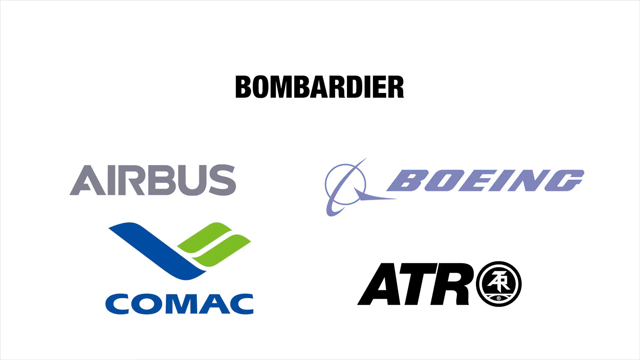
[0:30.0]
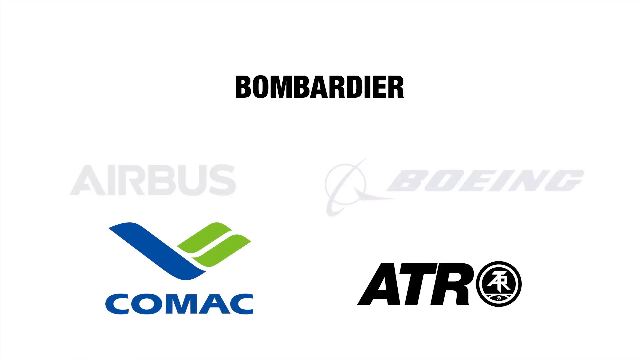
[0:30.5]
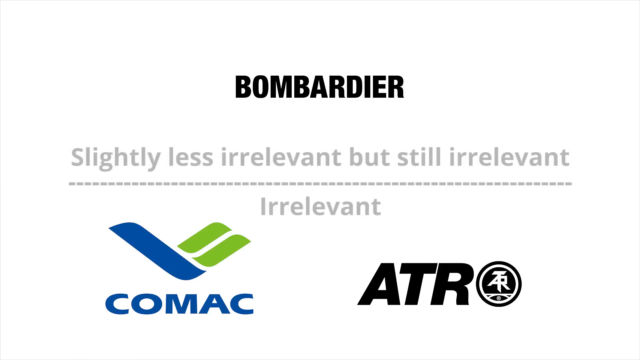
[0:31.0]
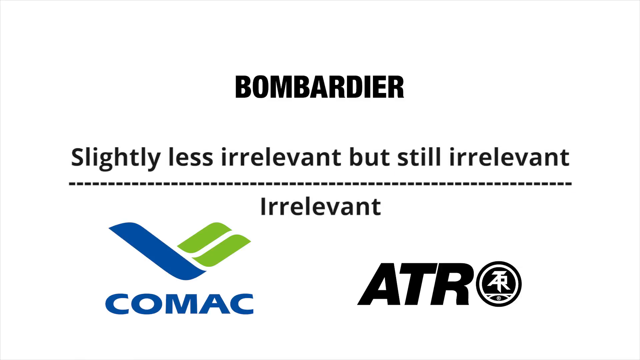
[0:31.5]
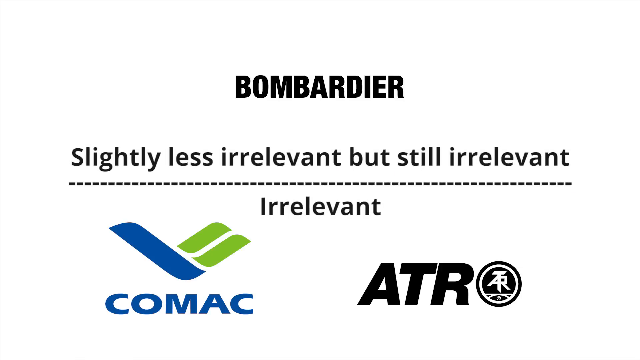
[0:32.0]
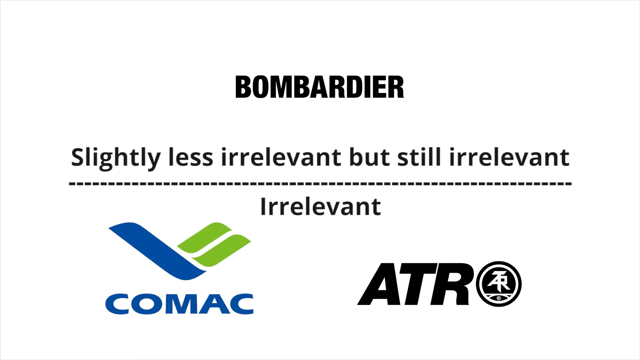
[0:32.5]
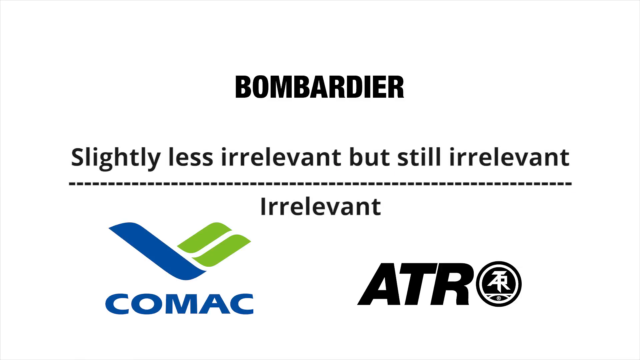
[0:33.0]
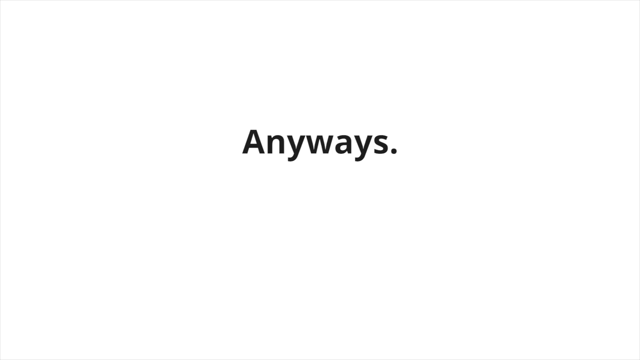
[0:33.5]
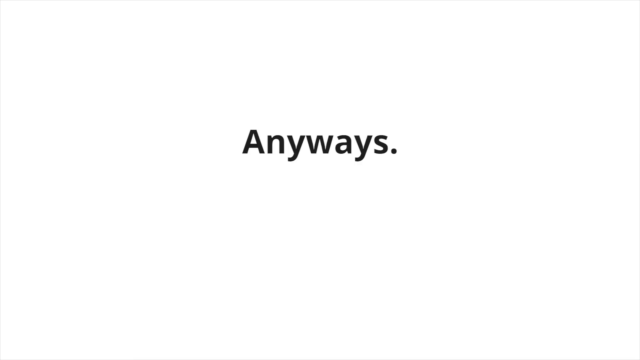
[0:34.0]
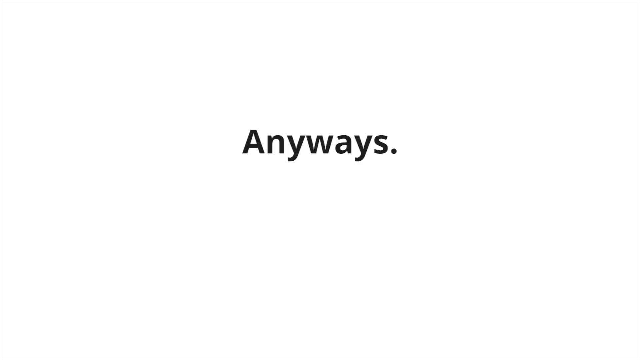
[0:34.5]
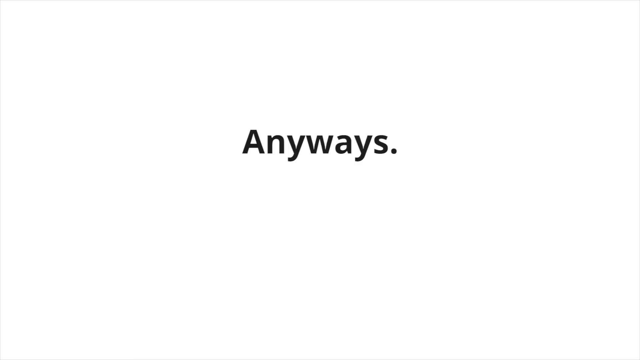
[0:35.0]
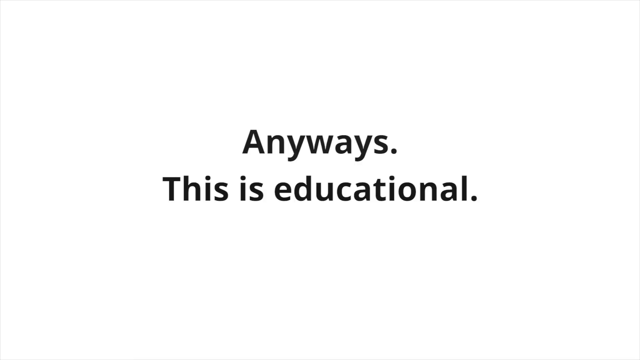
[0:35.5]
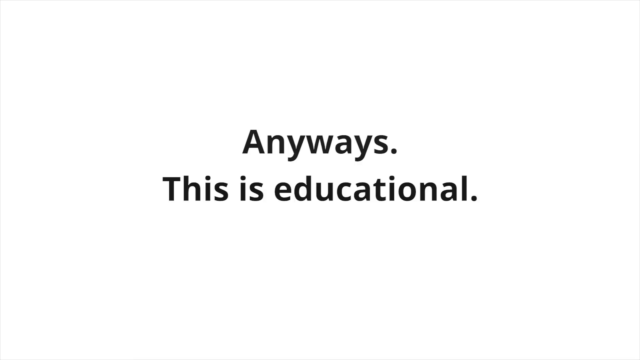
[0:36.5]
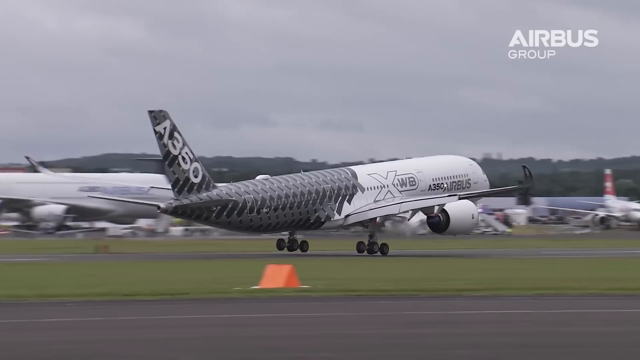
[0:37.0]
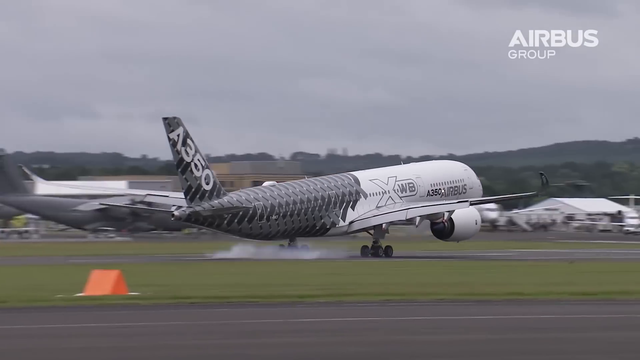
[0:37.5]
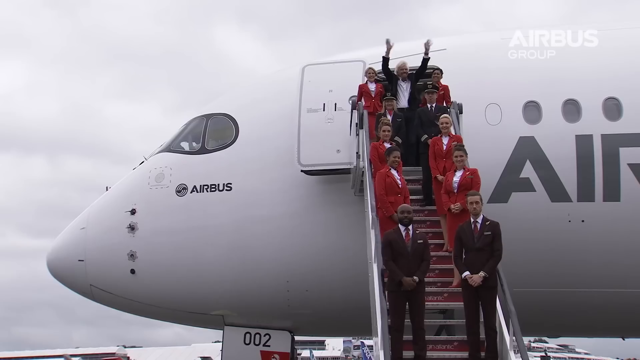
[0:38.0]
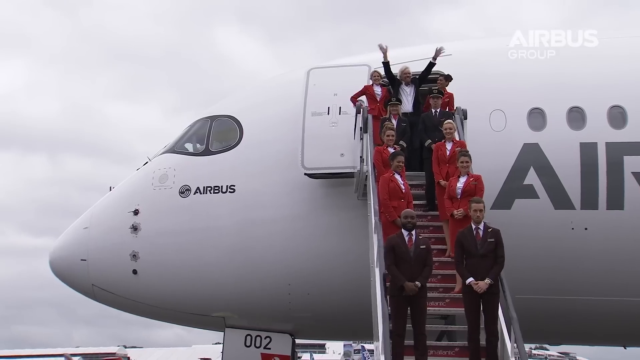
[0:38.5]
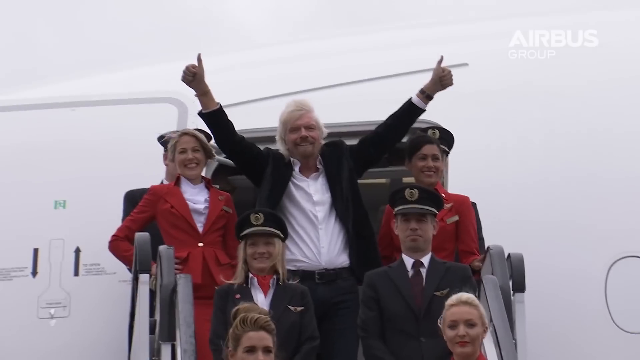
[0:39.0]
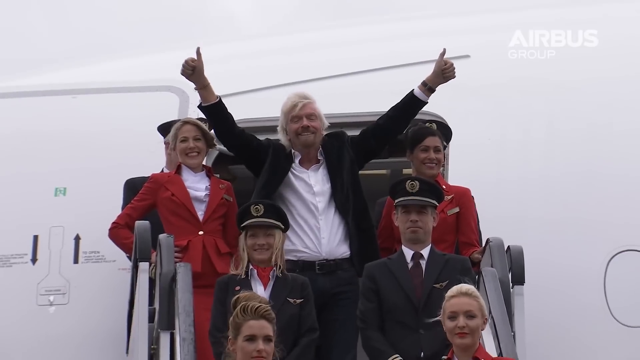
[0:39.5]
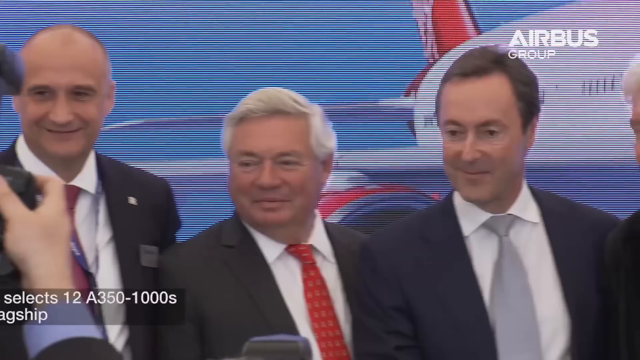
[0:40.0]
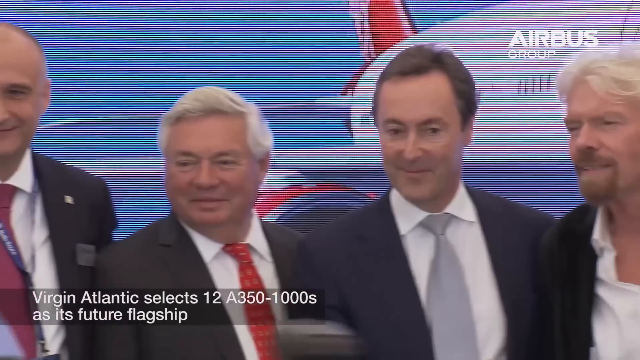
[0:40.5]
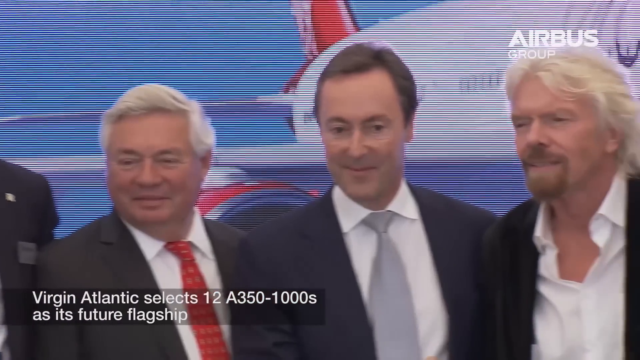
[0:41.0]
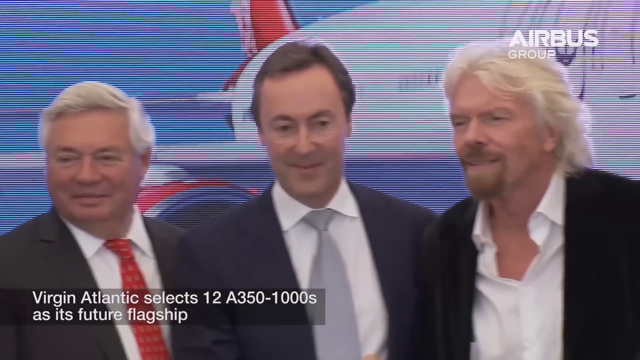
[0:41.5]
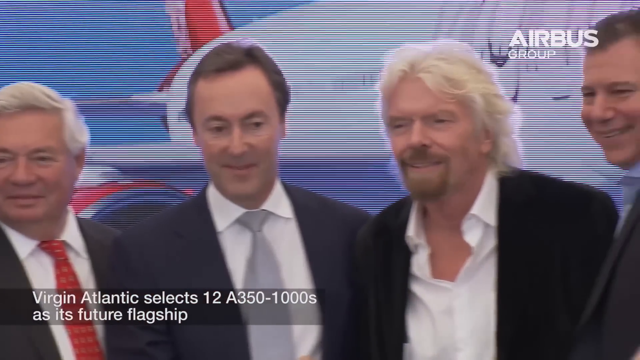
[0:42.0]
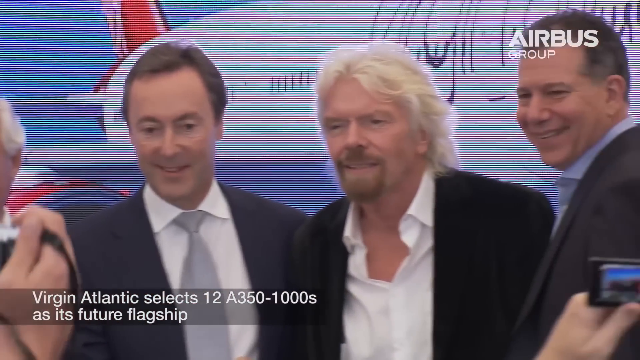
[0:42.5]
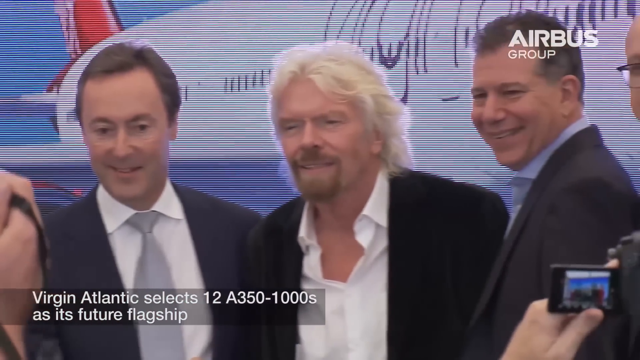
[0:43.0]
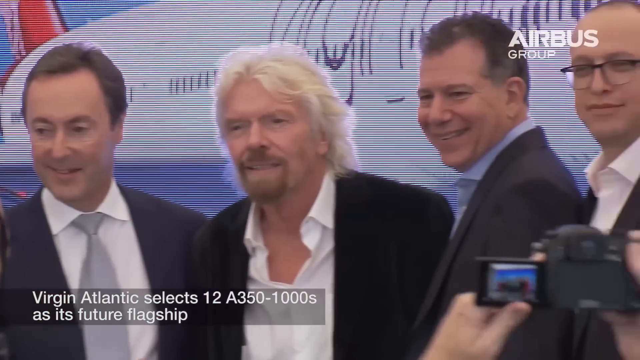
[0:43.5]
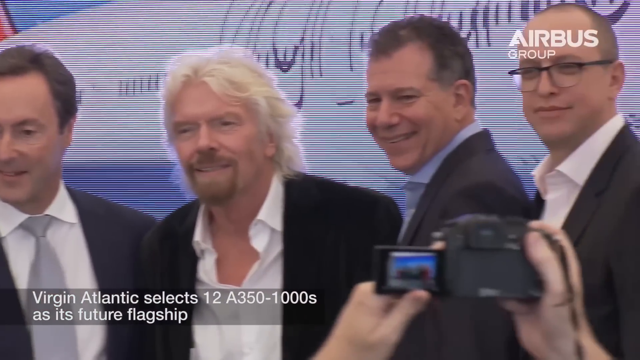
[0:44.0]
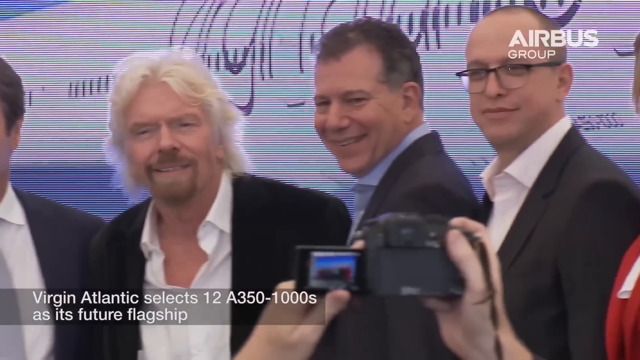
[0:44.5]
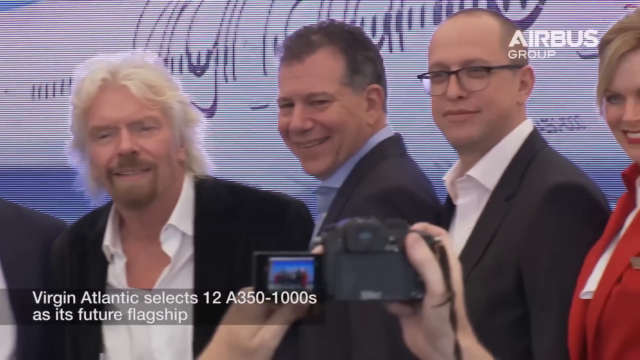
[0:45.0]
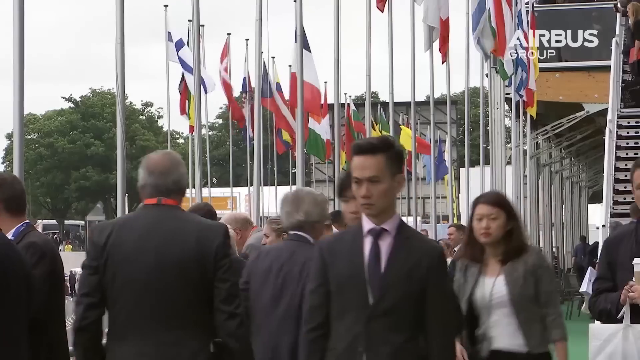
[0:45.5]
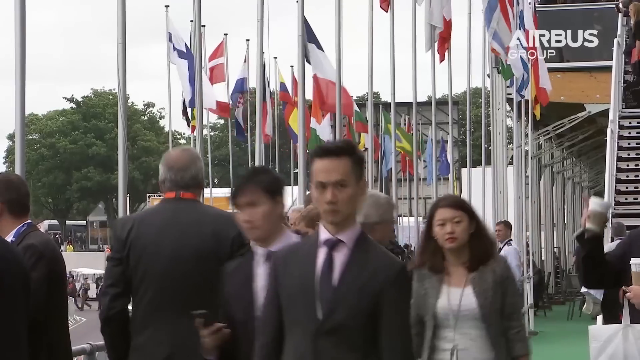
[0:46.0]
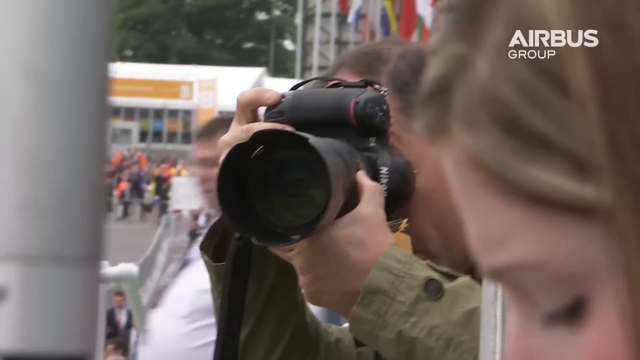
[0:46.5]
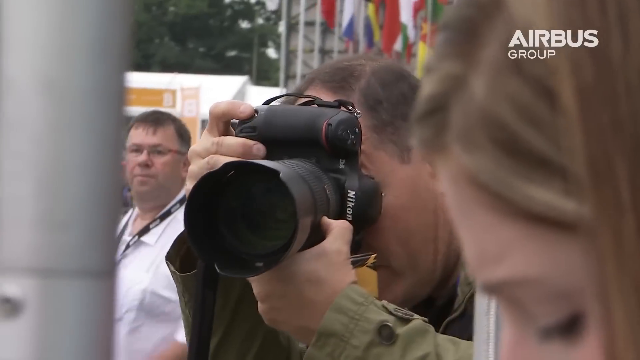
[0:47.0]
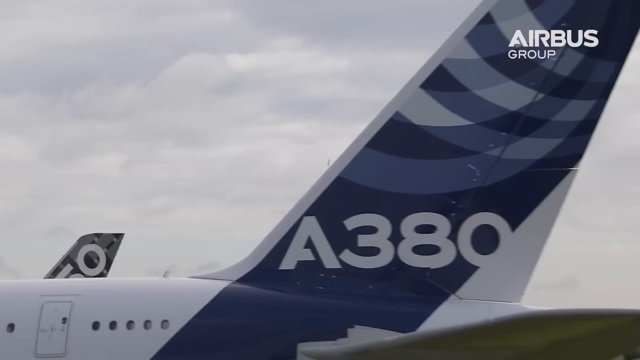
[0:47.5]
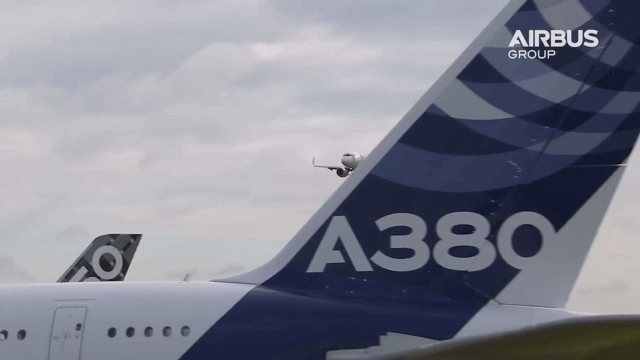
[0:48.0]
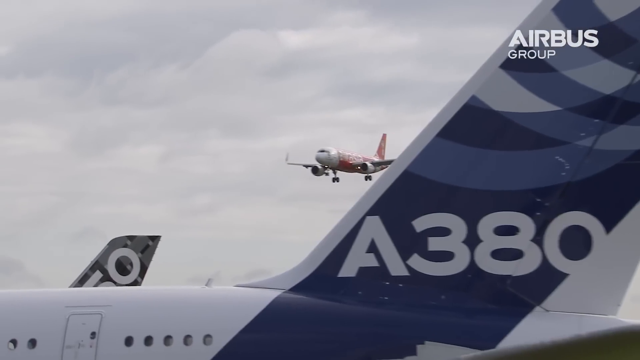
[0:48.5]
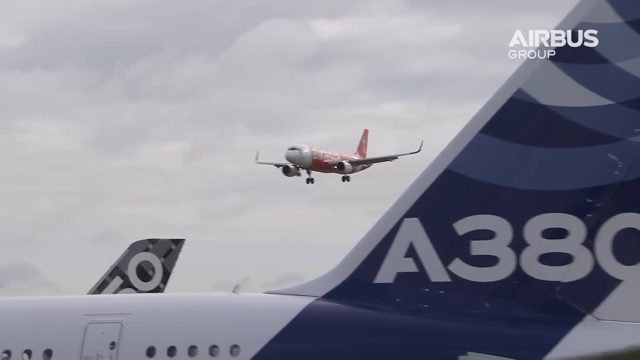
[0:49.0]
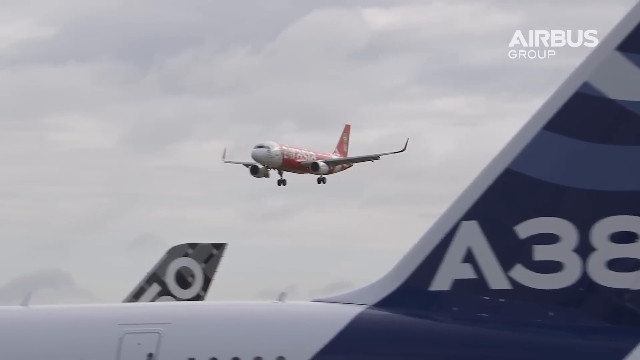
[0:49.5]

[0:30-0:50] The brands of Bombardier, Airbus, Boeing, Comac and ATR appear on a white background. The Boeing and Airbus brands disappear and are replaced by the words "Slightly less irrelevant, but still irrelevant", with a long dashed line below them and the word "Irrelevant" below that. The video cuts to the word "Anyways." and then "This is educational." A white and grey Airbus A350 is shown landing. Next is a plane entrance with stairs, full of people, including airplane crew: the women wear red and white uniforms and the men wear dark suits. At the center, a man in a black suit and white undershirt holds both hands up, waving to the crowd. In the next scene, this man poses with a group of men for a picture. A group of people is then shown walking on the streets, with people taking pictures. The tail of an A380 is shown while an Air Asia plane is seen on approach.